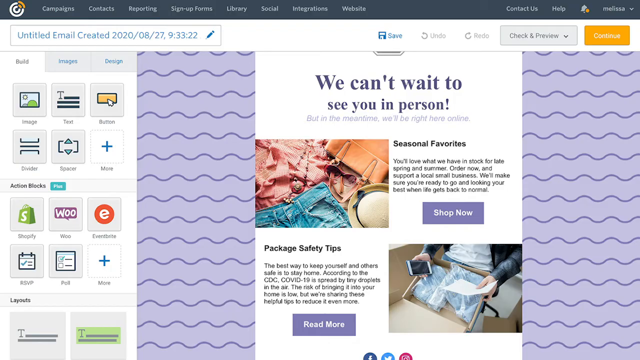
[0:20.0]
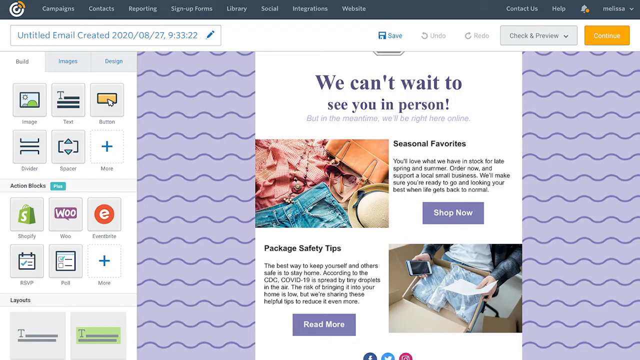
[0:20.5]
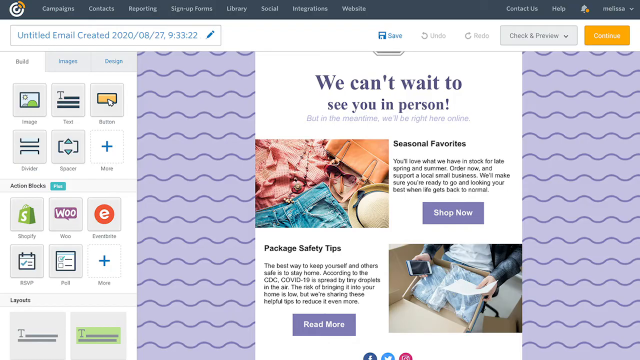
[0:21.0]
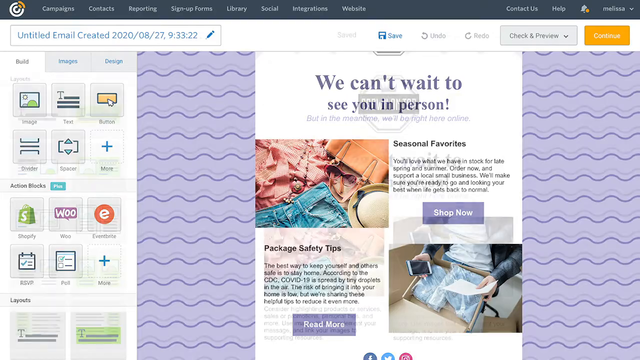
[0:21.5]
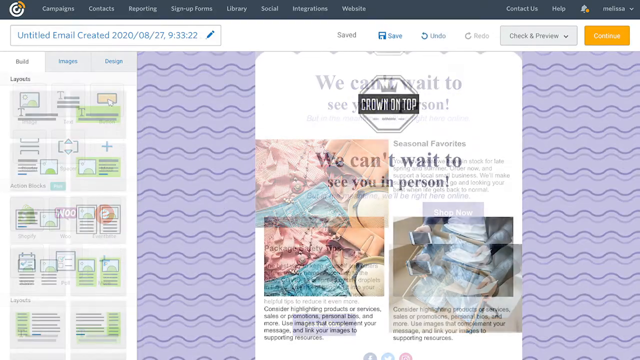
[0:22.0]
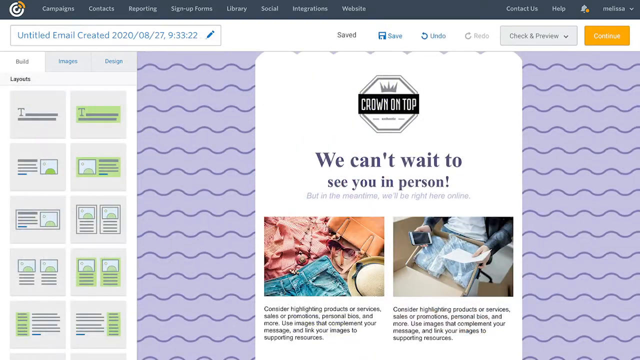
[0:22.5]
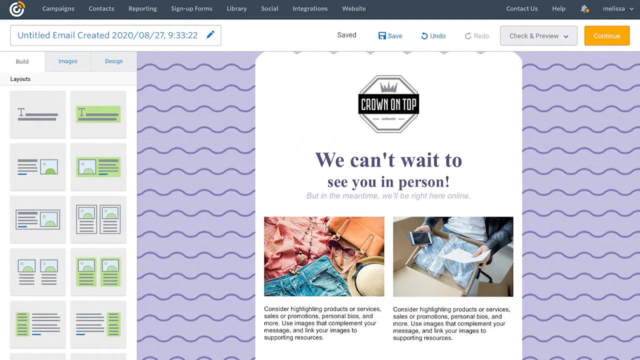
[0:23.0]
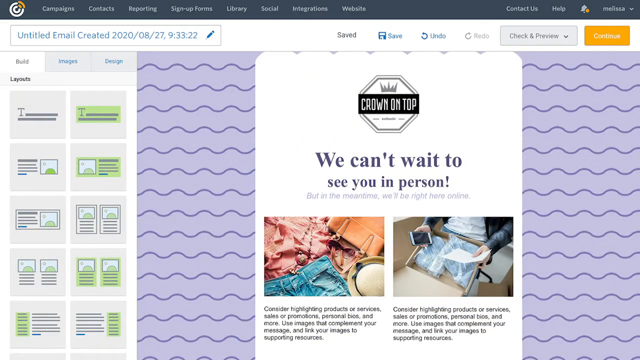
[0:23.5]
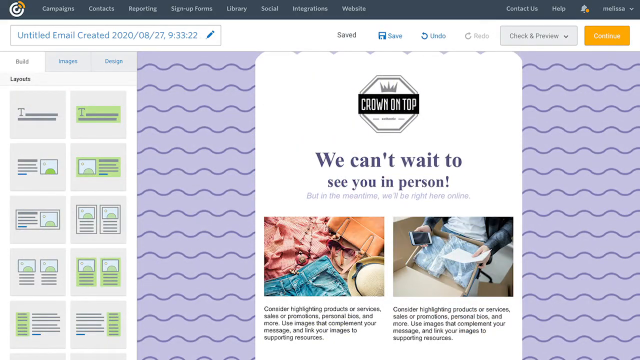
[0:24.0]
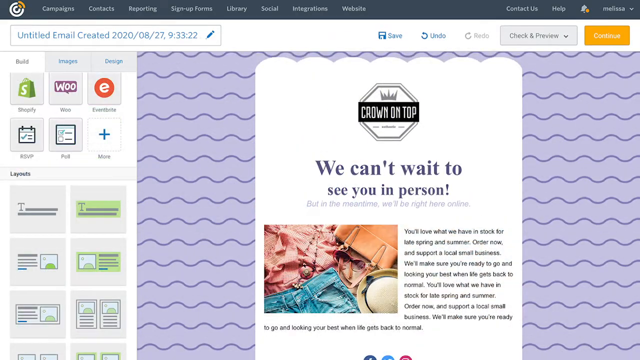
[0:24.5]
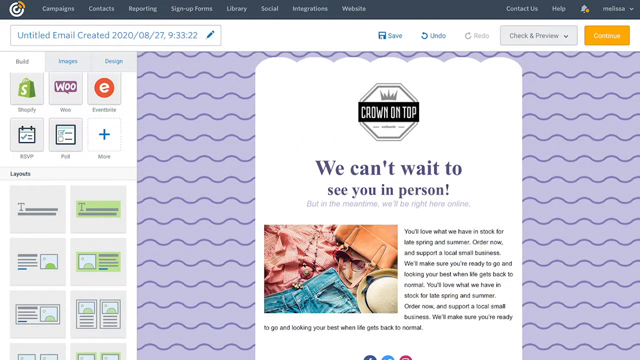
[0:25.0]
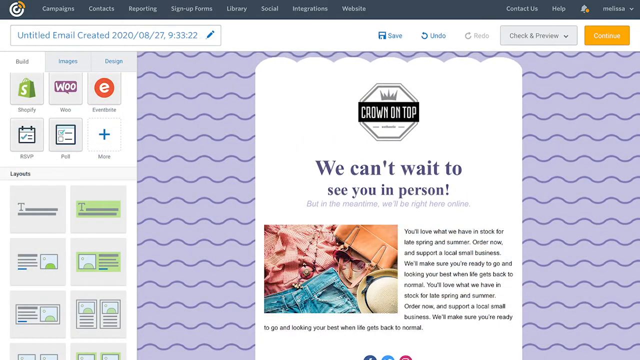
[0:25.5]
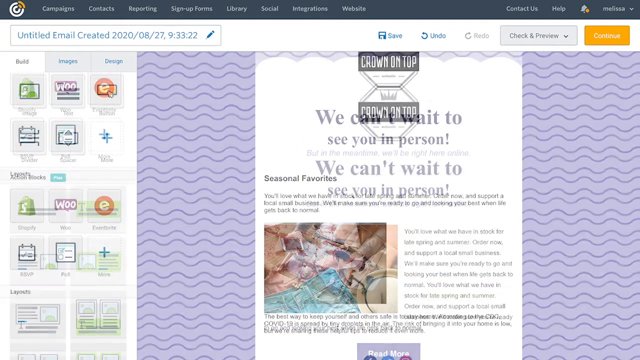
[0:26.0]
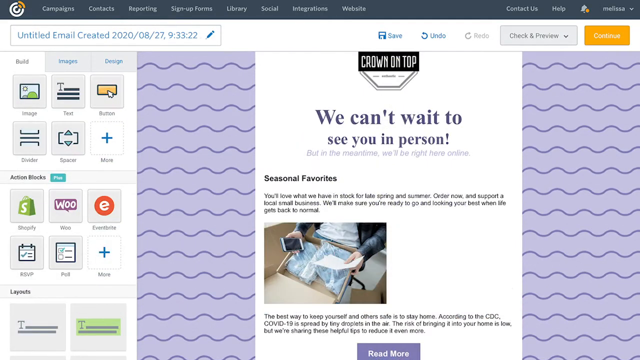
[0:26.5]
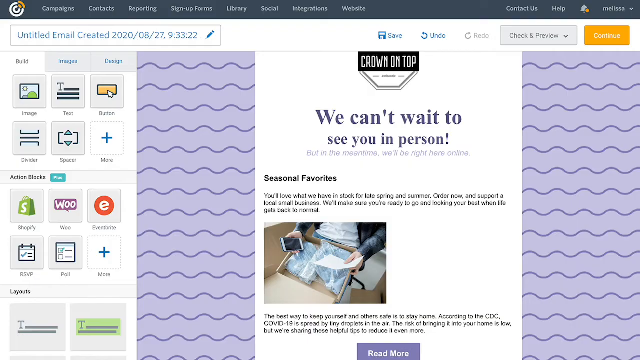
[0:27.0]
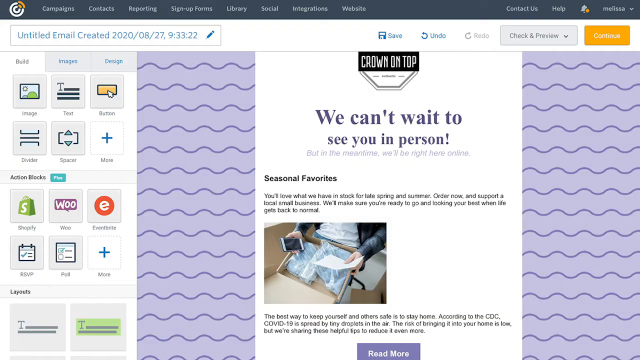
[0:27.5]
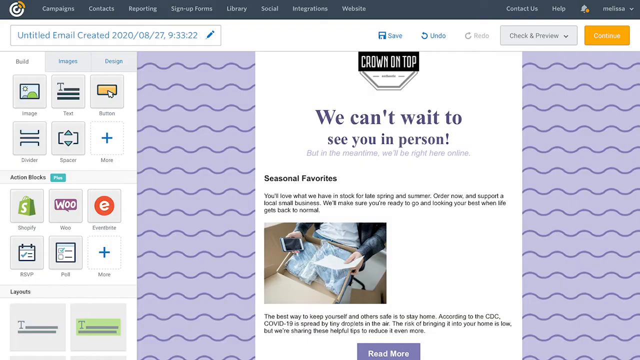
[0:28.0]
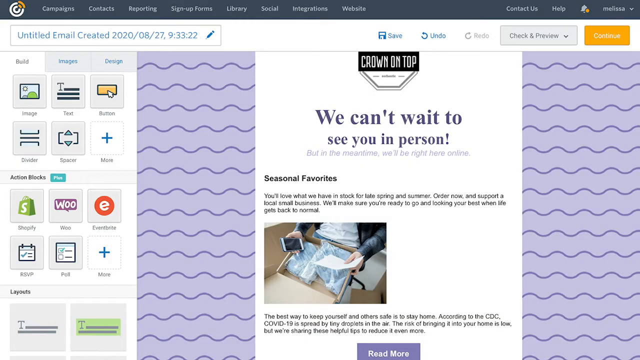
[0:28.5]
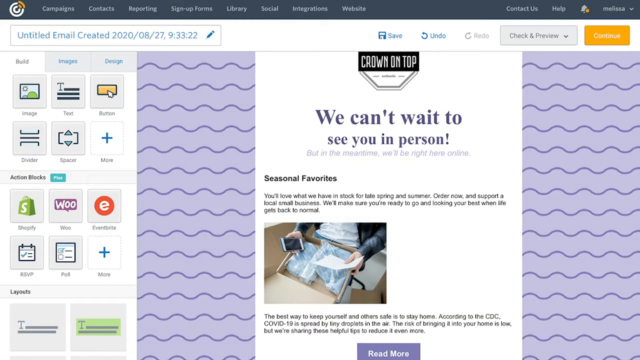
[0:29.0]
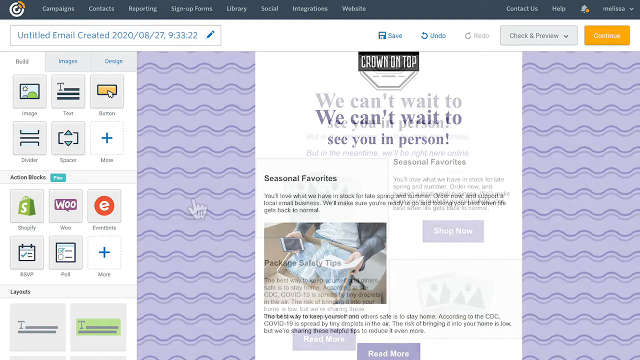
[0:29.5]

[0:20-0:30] The email has a purple background with darker purple squiggly lines in a repeating pattern. Its color scheme is purple overall: the "shop now" and "read more" buttons are purple with white text, and the header text is a fairly dark purple, while the smaller text under seasonal favorites and package safety tips is in a black font. The email reads: "You'll love what we have in stock for late spring and summer. Order now and support a local small business. We'll make sure you're ready to go and looking your best when life gets back to normal. Package safety tips. The best way to keep yourself and others safe is to stay home. According to the CDC, COVID-19 is spread by tiny droplets in the air. The risk of bringing it into your home is low, but we're sharing these helpful tips to reduce it even more." The retail store appears to be called Crown on Top.